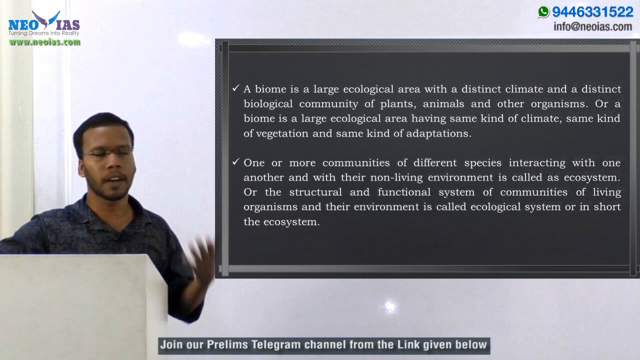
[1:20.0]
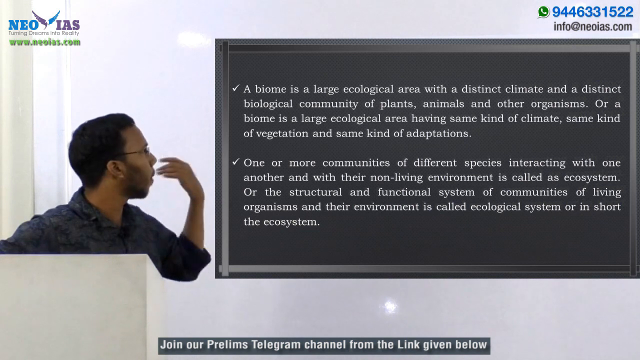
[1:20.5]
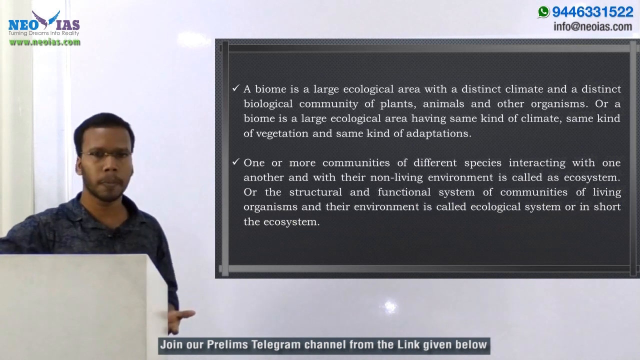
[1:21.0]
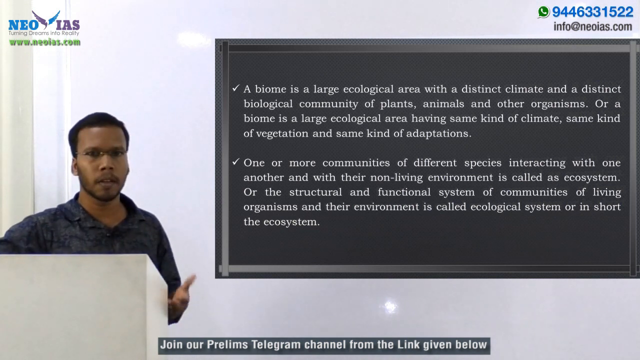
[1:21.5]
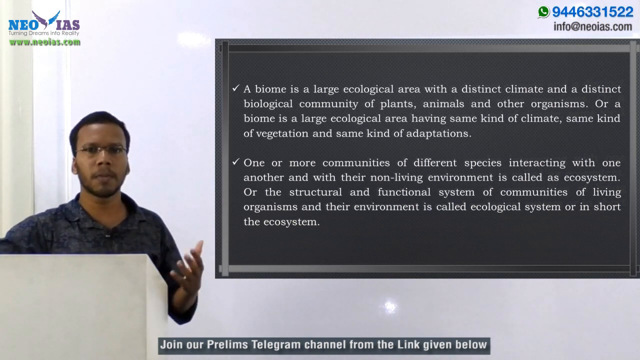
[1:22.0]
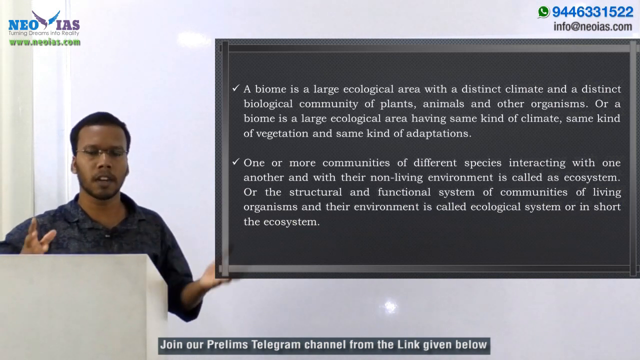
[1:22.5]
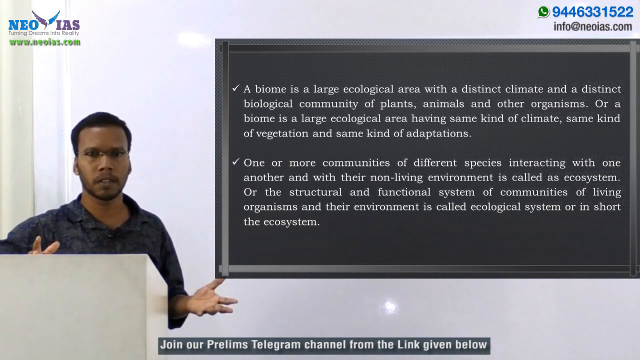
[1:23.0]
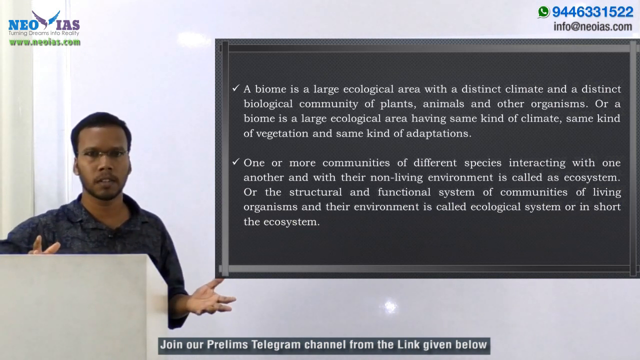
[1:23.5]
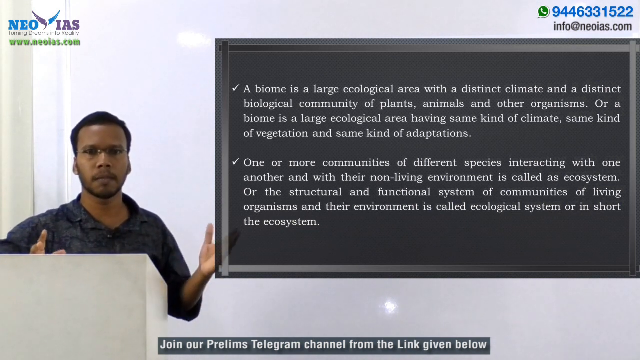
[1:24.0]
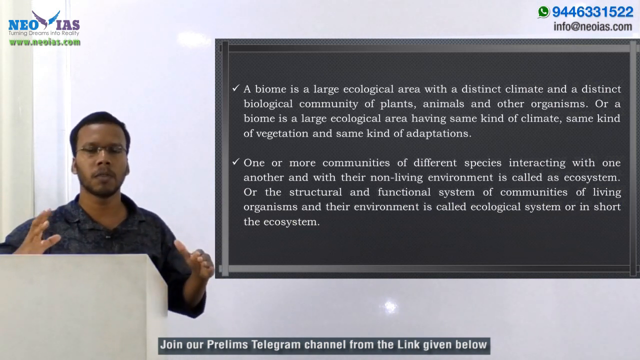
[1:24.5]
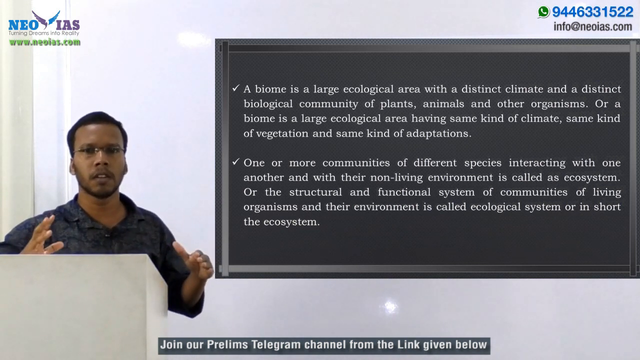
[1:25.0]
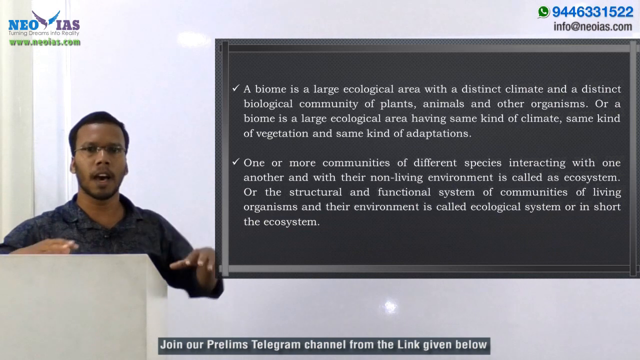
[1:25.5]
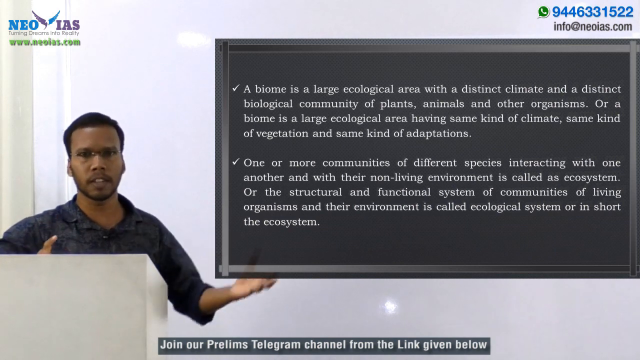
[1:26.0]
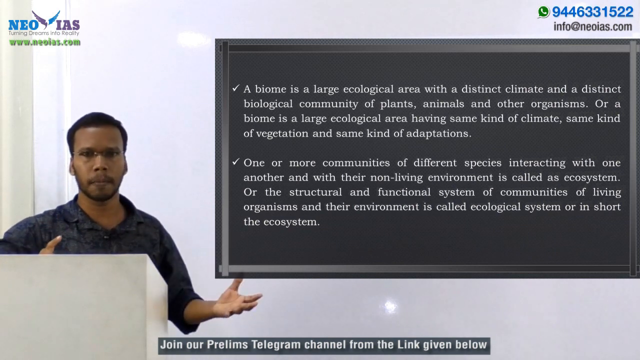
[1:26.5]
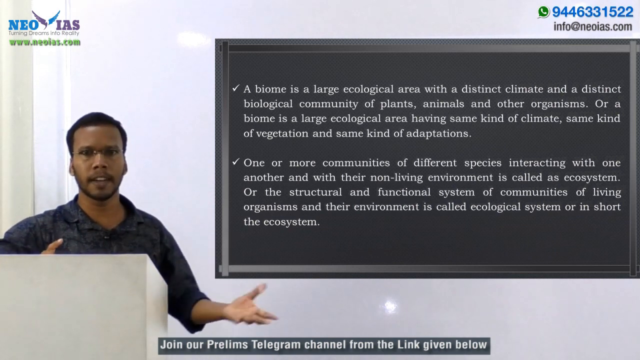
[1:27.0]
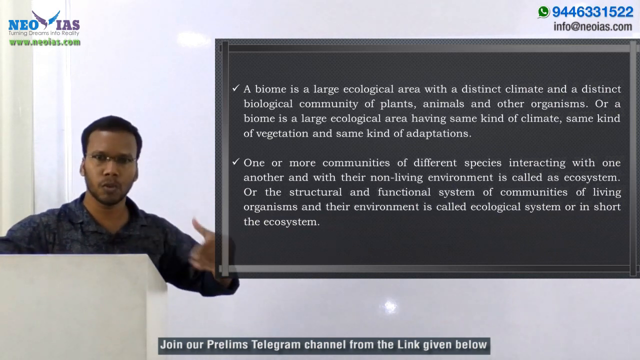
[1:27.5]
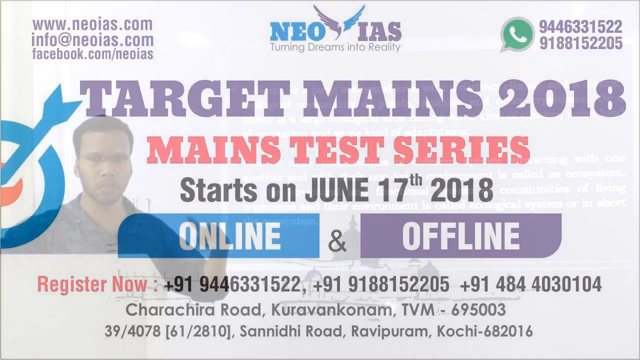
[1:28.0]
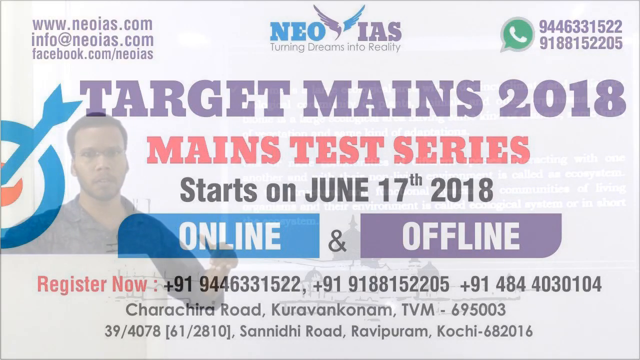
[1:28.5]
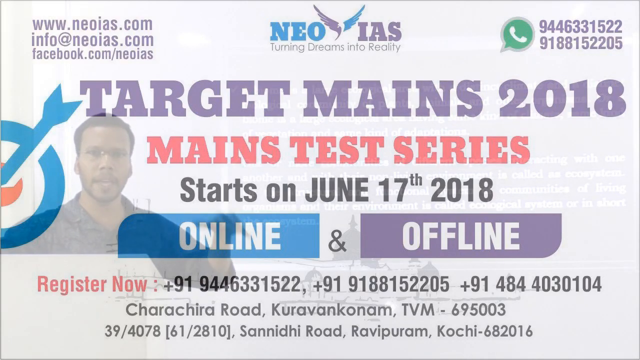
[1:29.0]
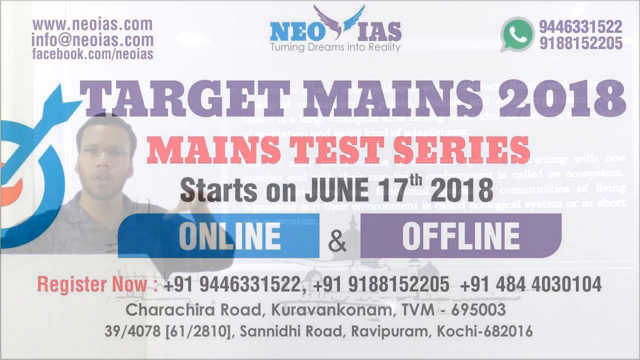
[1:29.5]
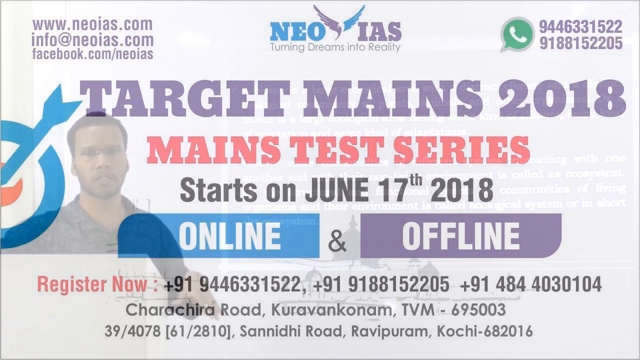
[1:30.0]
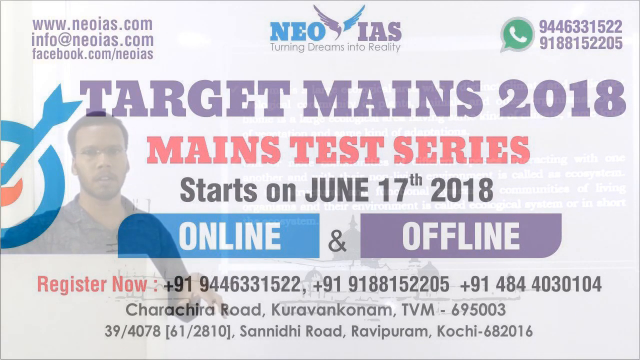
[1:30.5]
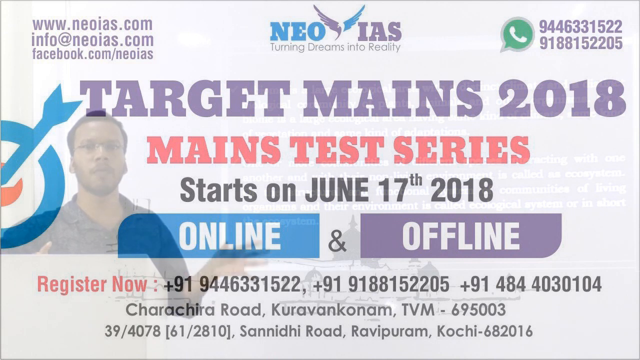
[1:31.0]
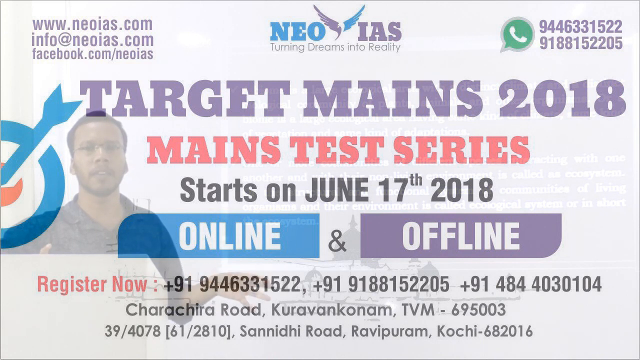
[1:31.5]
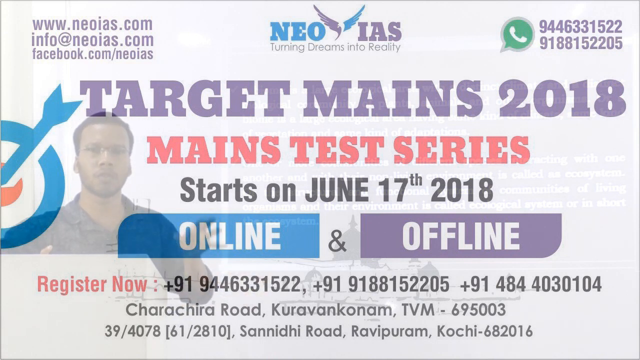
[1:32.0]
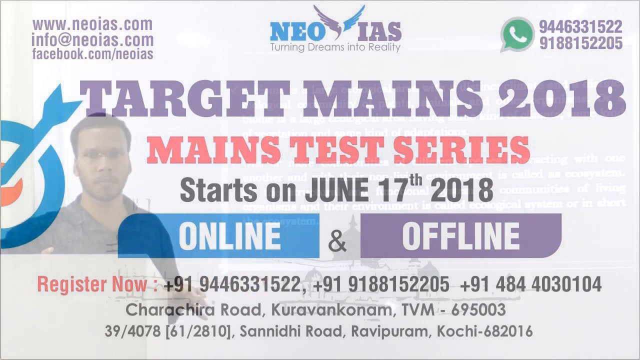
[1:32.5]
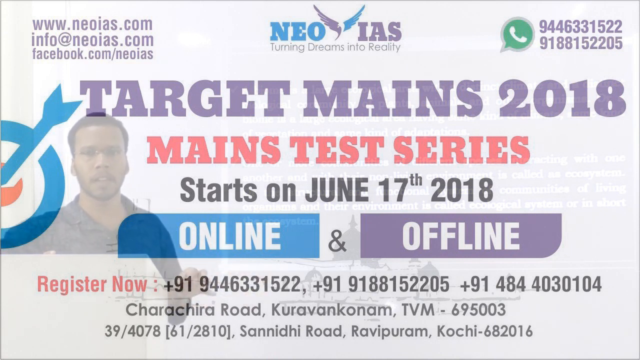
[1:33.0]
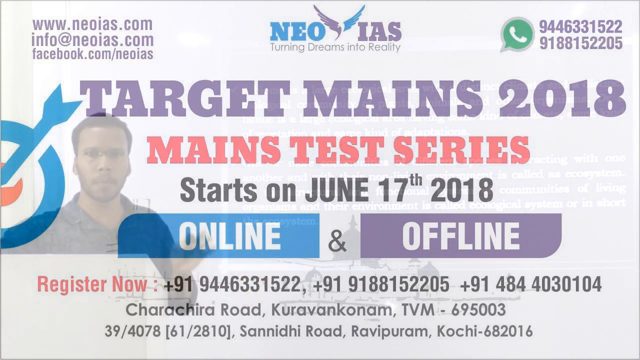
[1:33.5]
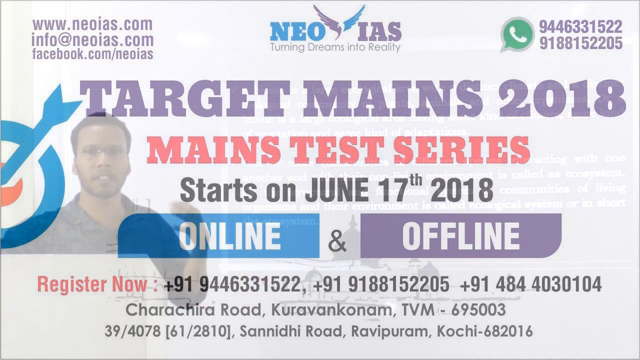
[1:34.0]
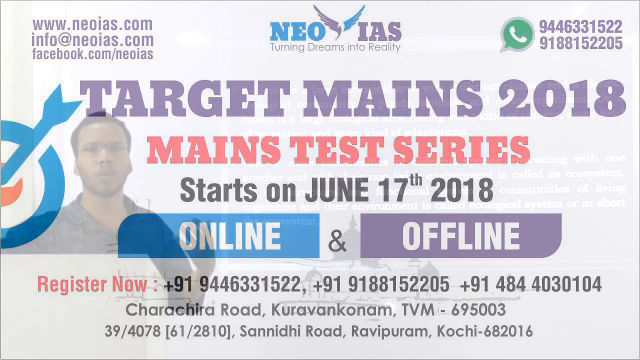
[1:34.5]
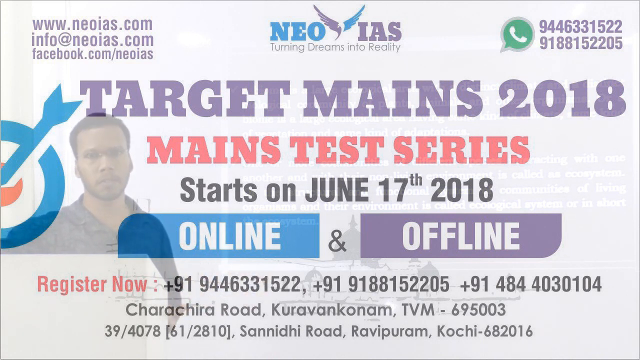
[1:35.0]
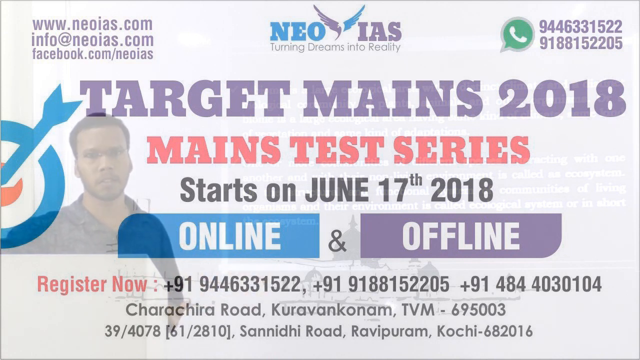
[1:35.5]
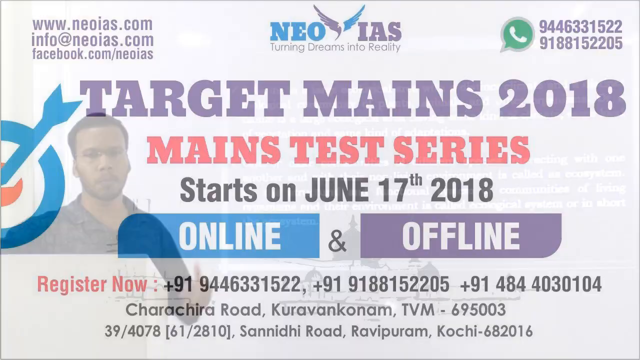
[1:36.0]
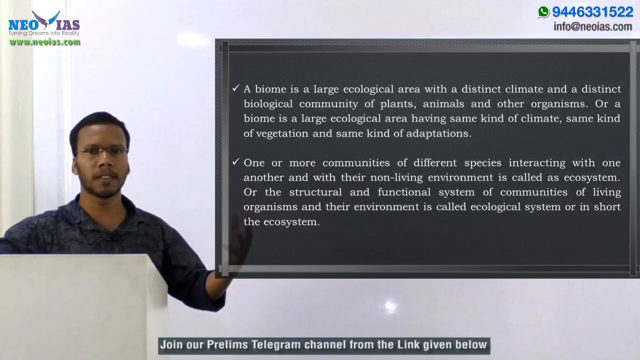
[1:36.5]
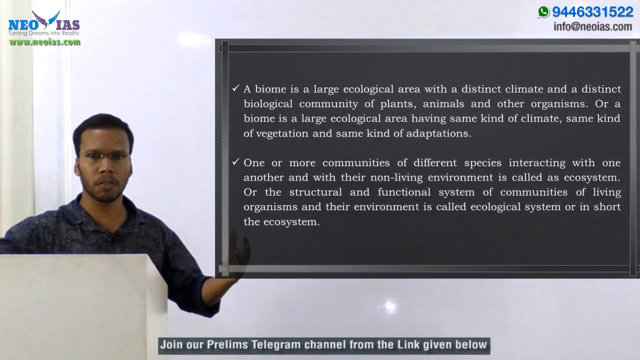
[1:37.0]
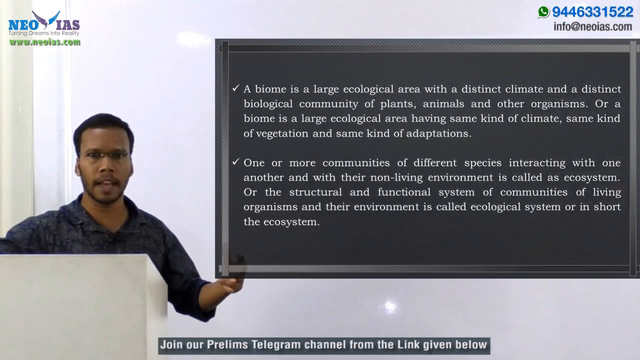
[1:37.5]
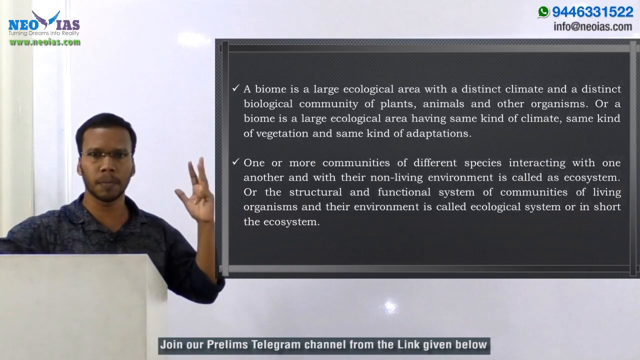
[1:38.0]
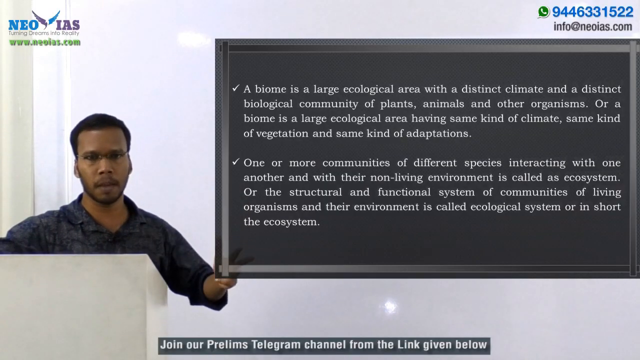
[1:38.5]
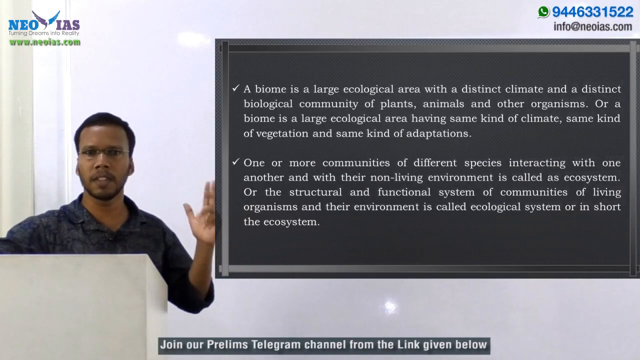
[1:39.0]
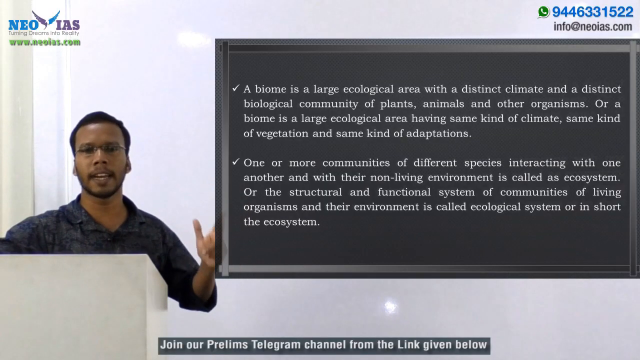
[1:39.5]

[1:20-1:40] The man turns his head to the left as if looking at the animated blackboard, which is not actually there, and then turns around and uses both hands for a moment. For emphasis he holds both hands just barely above the altar he is at, keeps them there as he speaks, and makes a sort of cycling motion with his hands. An overlay of information appears again, with the website and the telephone number in the far left and right corners. It reads "target mains 2018" and mentions a test series starting June 17th, with a blue and purple online and offline banner and registration information at the bottom. The video of him shows through the transparent overlay, so both are visible at once, which looks a little confusing and busy. The video then returns to him gesturing, moving his hand up and down in an almost pounding motion, with the same two check marks of biome information still shown.